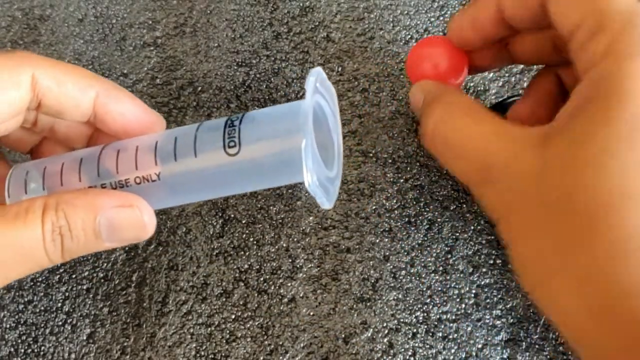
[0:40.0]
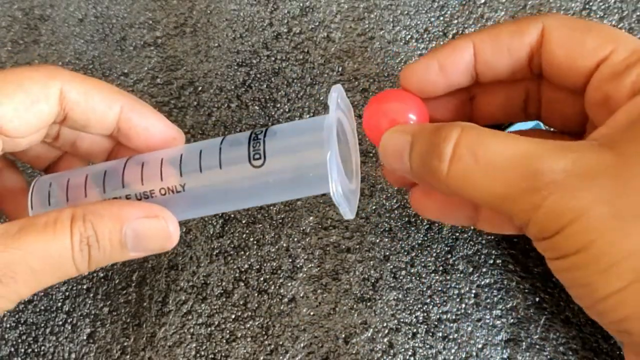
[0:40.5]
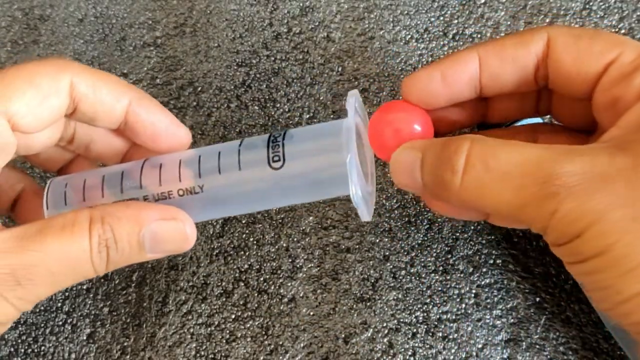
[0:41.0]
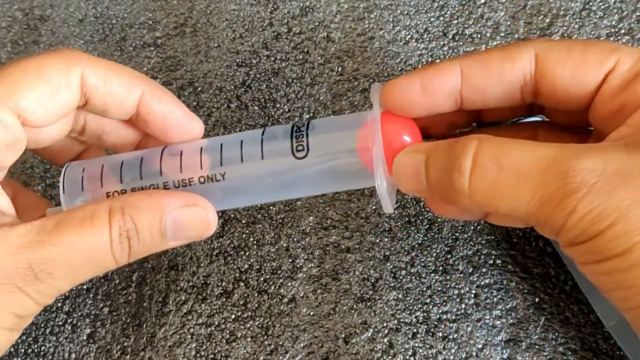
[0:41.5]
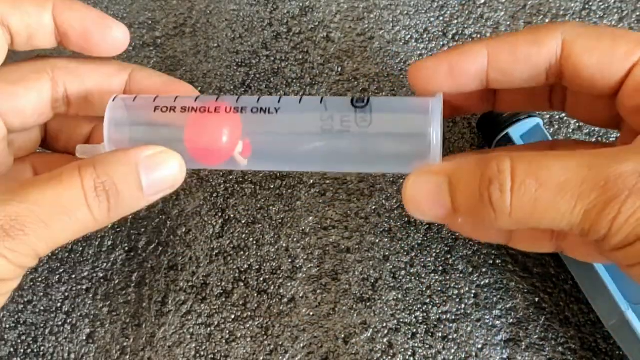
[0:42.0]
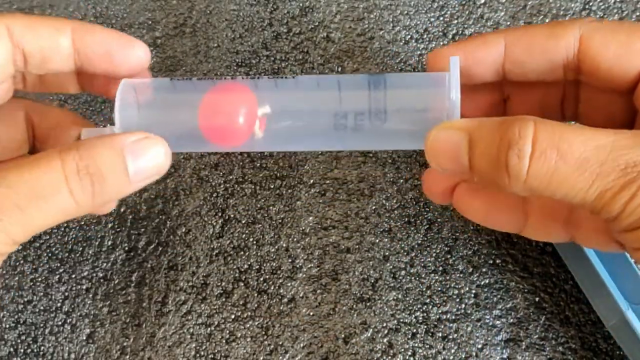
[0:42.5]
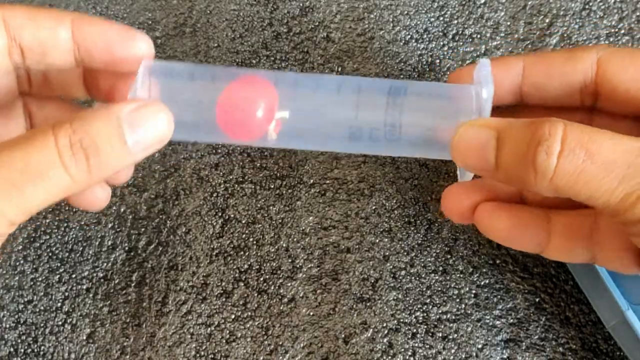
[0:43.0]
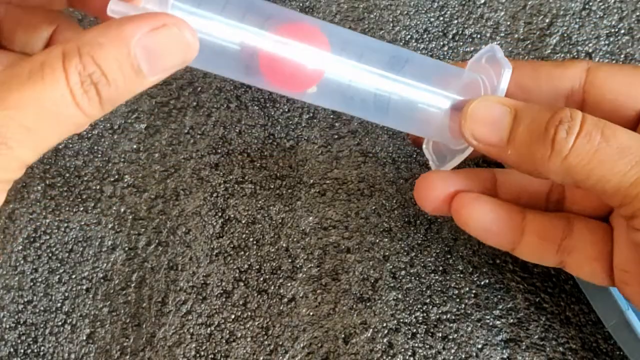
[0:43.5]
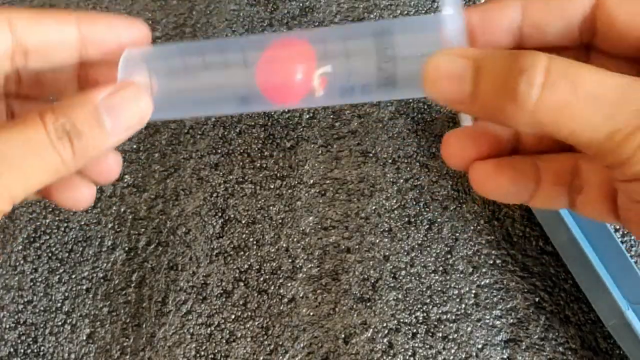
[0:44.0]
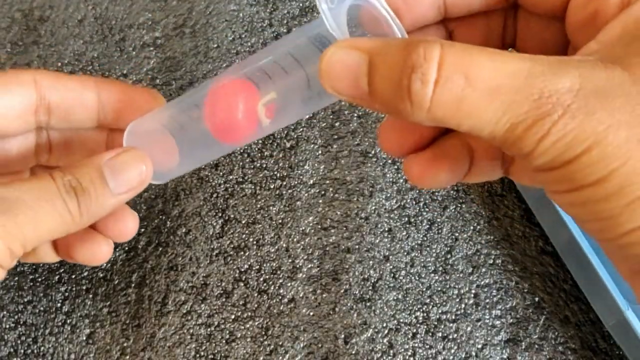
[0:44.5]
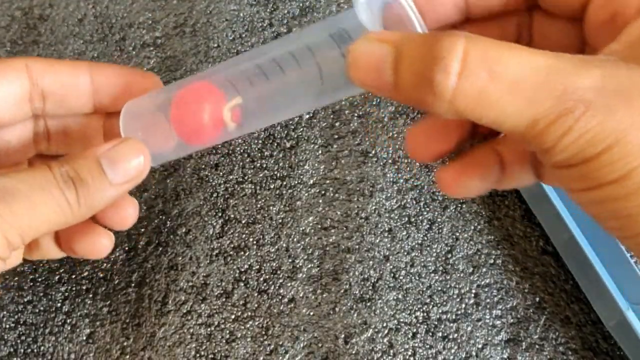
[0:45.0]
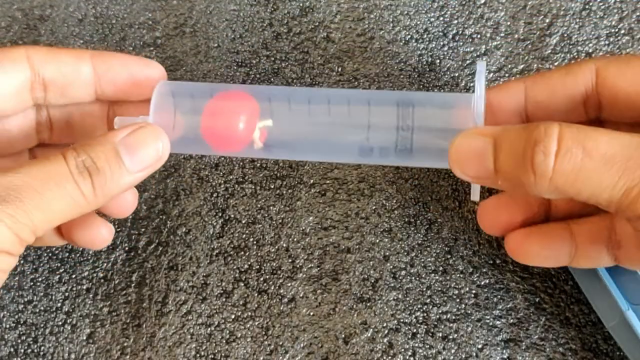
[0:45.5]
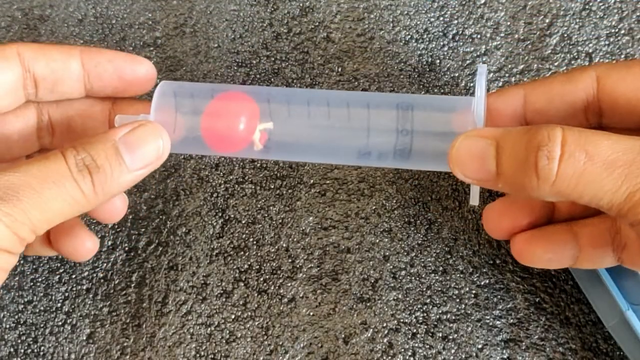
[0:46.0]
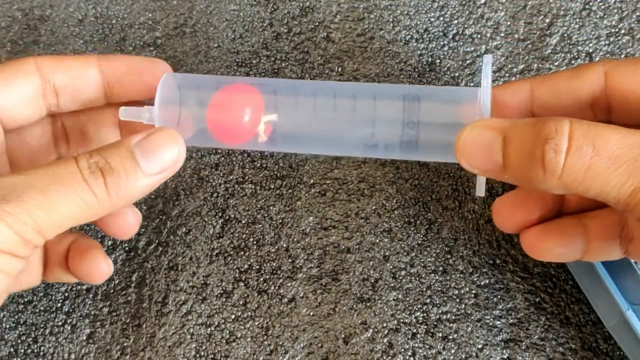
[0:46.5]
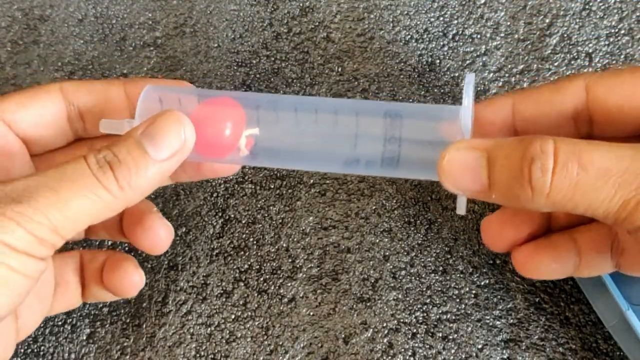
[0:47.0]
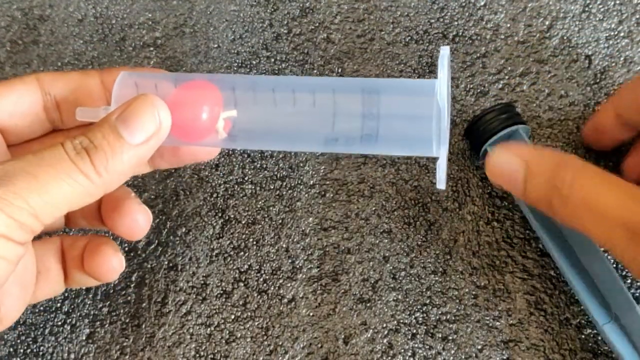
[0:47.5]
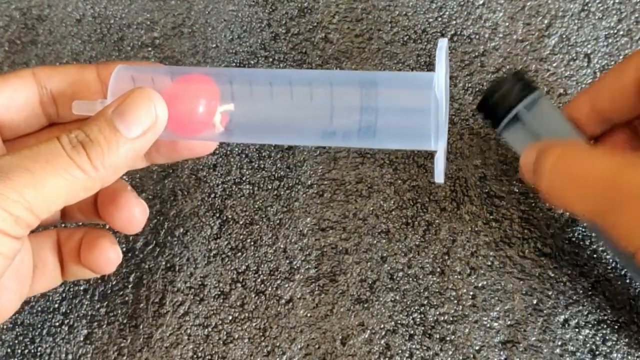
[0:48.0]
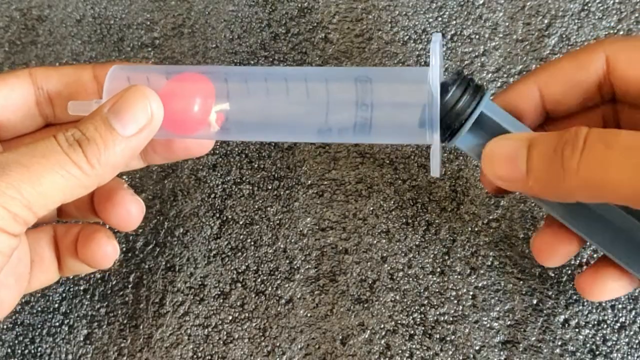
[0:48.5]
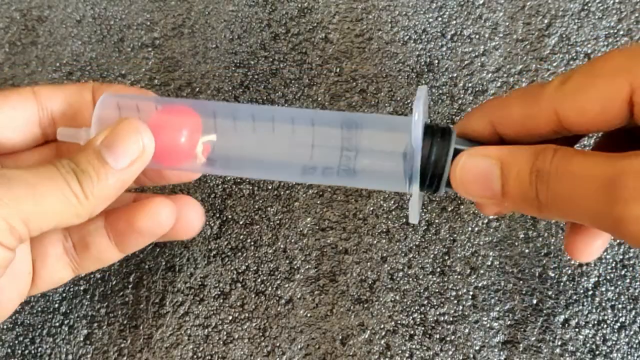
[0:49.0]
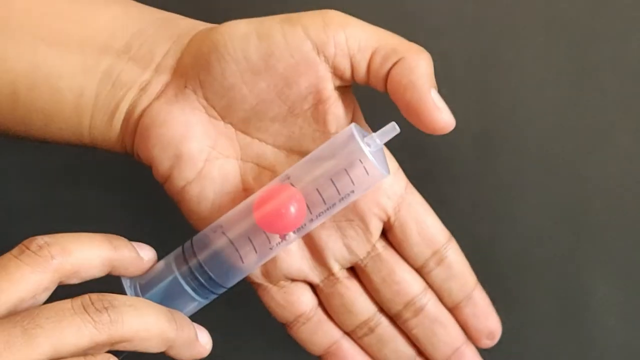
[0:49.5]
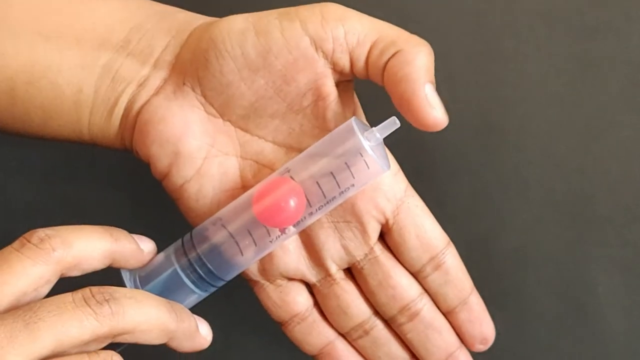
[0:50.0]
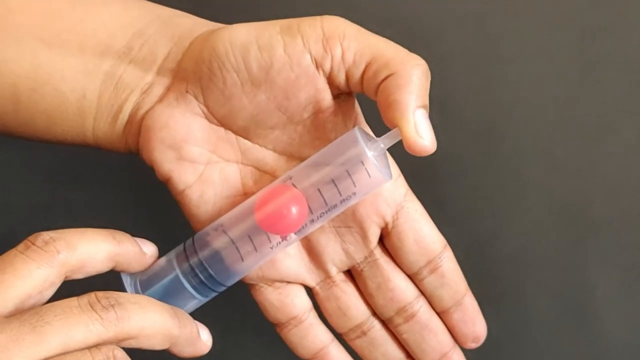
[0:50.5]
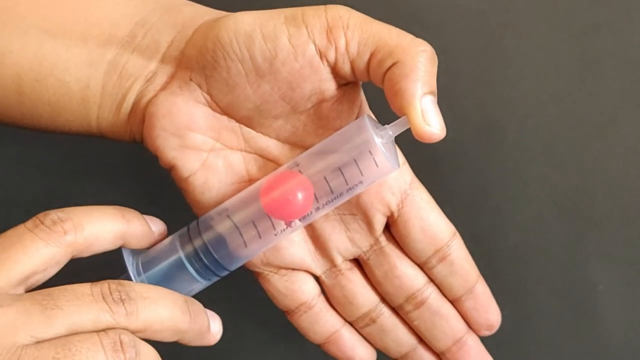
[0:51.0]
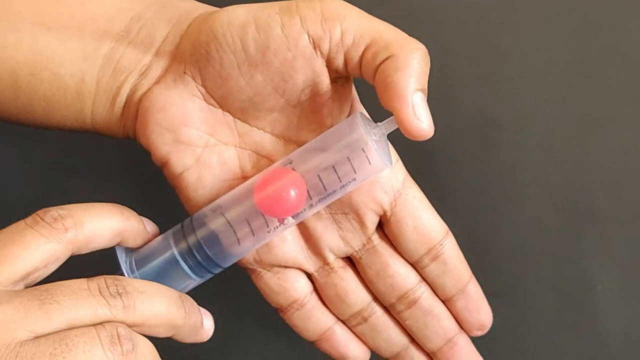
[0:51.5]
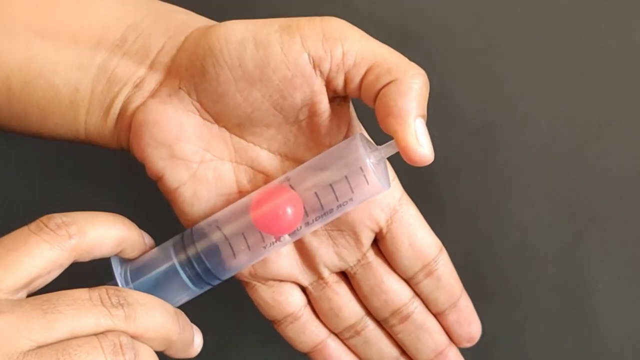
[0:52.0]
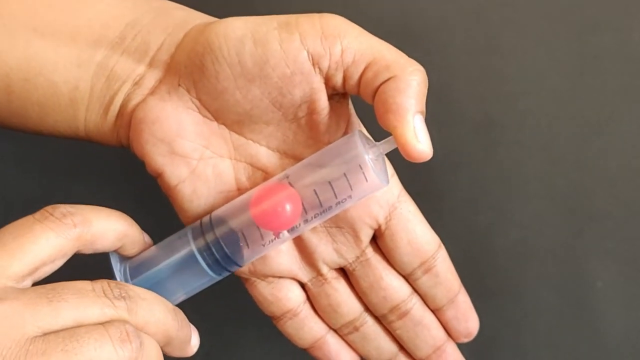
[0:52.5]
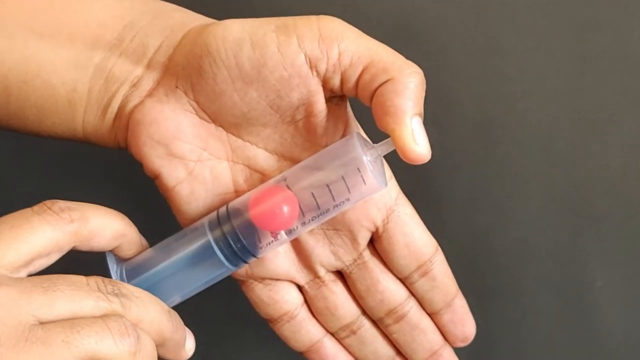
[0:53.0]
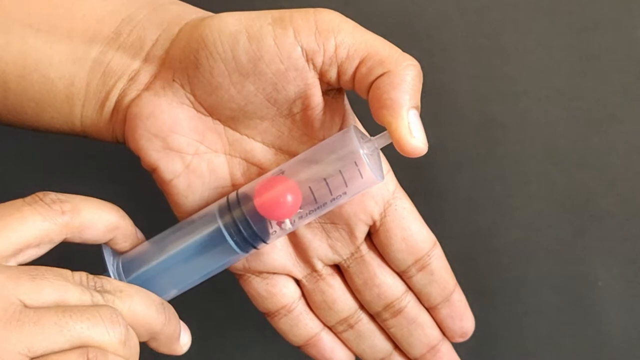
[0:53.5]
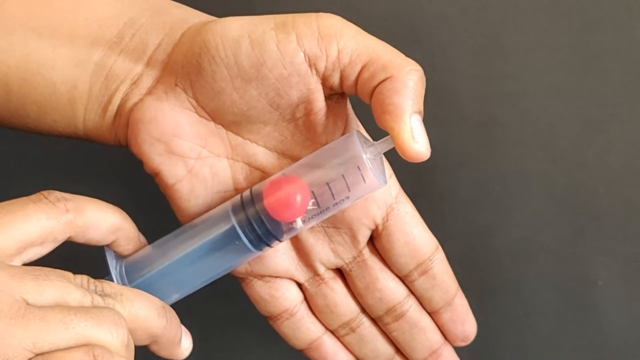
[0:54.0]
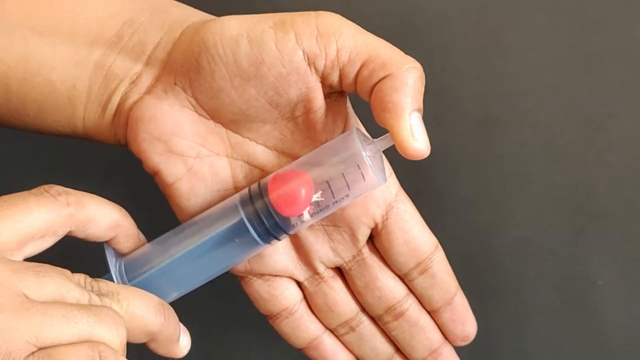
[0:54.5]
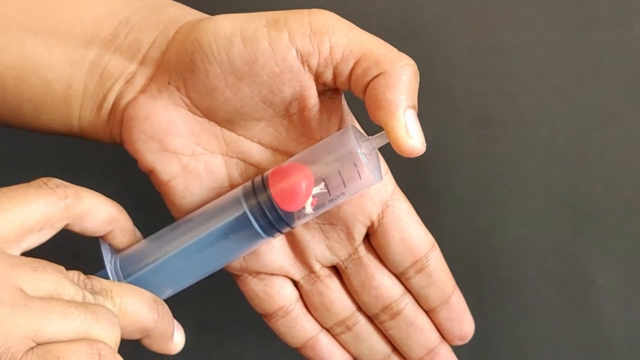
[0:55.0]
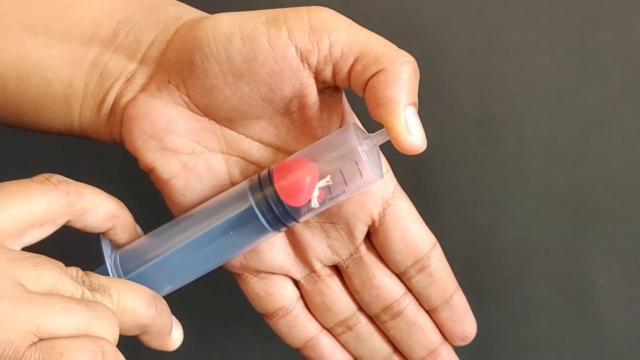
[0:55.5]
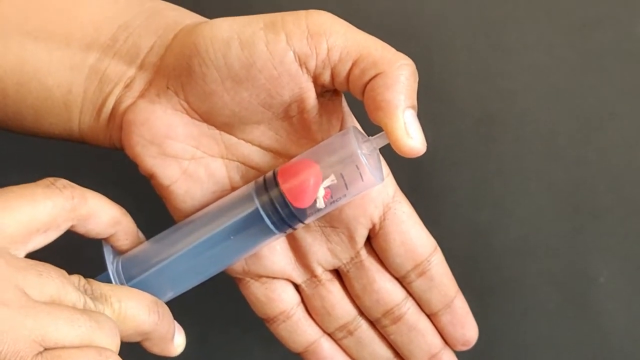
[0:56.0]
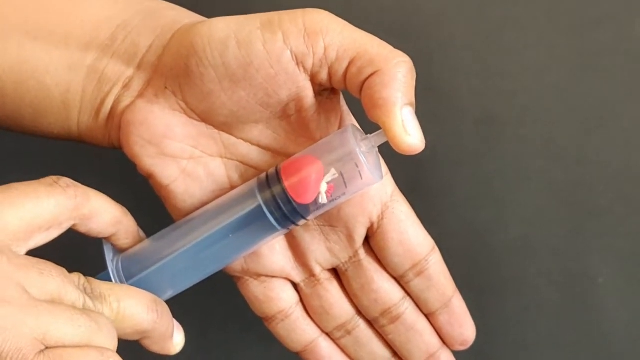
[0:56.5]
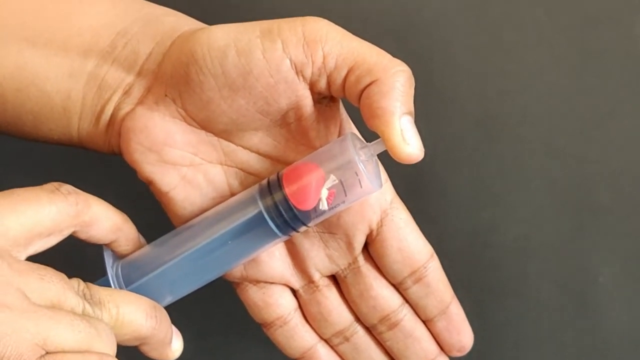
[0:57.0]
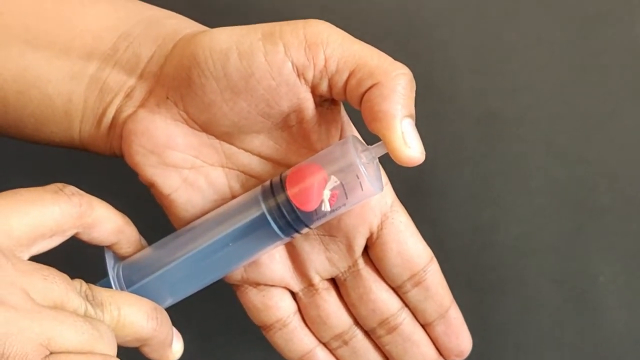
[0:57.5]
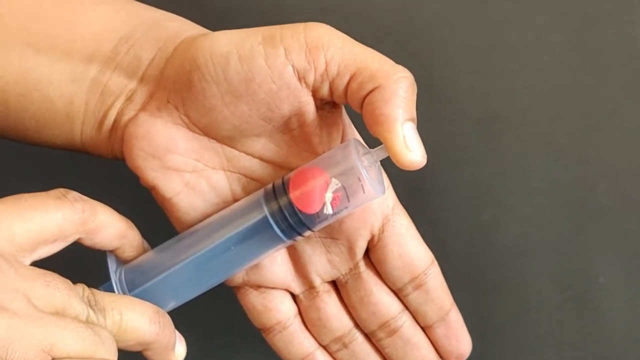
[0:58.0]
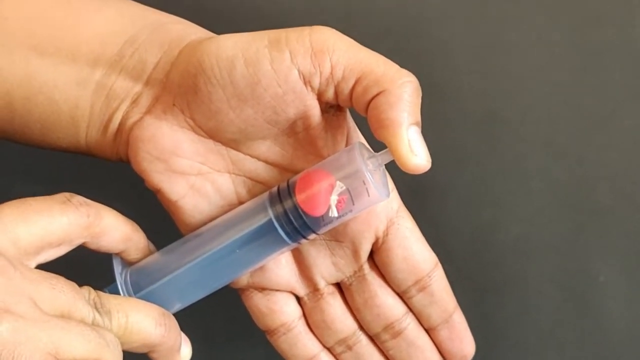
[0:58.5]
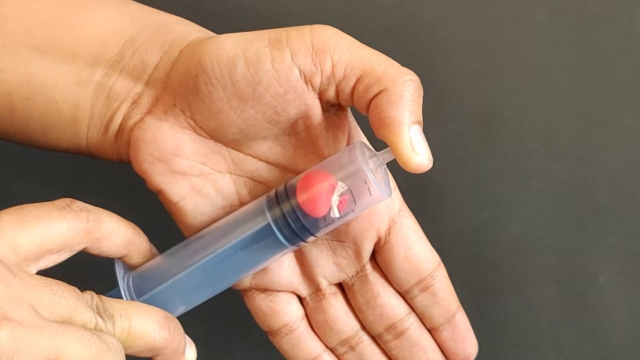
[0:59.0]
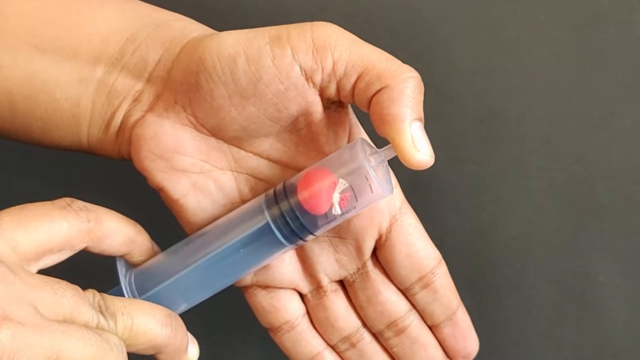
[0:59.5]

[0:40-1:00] A clear syringe of about 20 ml, a red balloon, and a thread are shown, with writing stating that these are the items needed. Next, the inflated red balloon tied with the white thread is shown beside the clear syringe. The person doing the experiment picks up the red balloon, shows the thread tied to it, and takes out the end of the syringe used to push the air up. They insert the red balloon inside, put the back of the syringe in, and push the balloon up with it. The balloon becomes smaller, and as it is about to reach the top, with the syringe's nozzle closed, the back of the syringe goes down by itself, leaving the balloon in the middle of the syringe without the person doing anything to it. At the end, the concept of Boyle's law is explained.